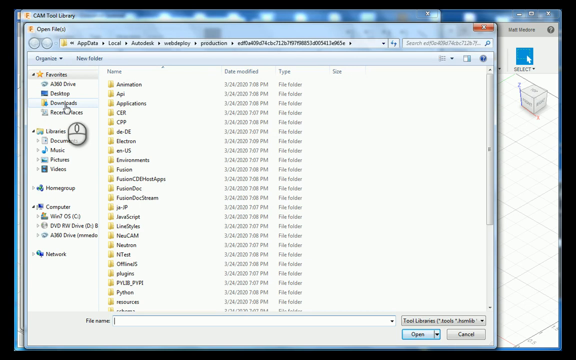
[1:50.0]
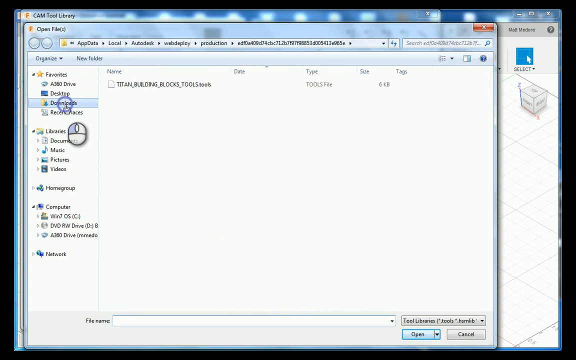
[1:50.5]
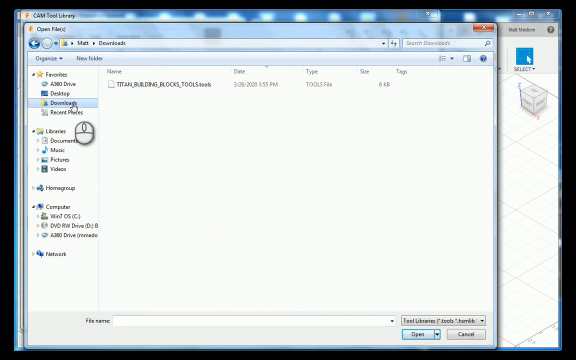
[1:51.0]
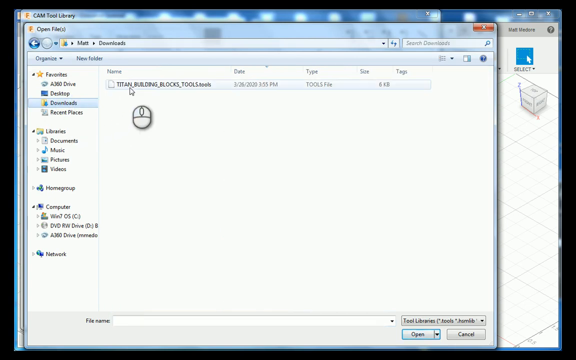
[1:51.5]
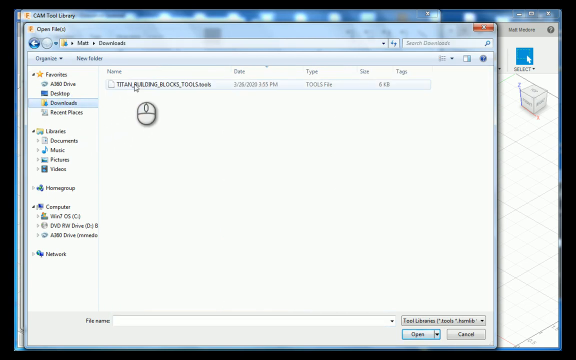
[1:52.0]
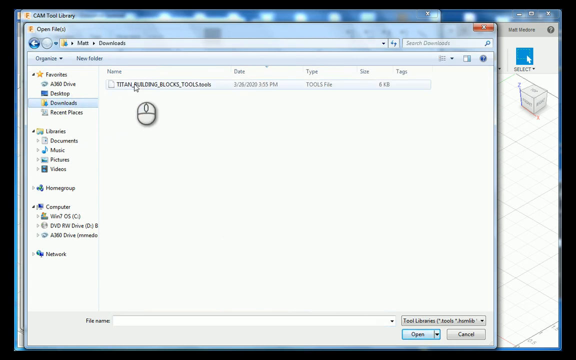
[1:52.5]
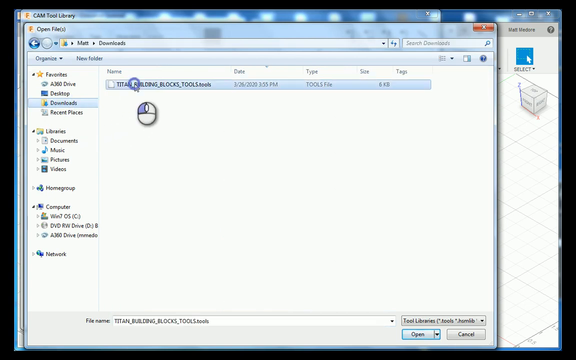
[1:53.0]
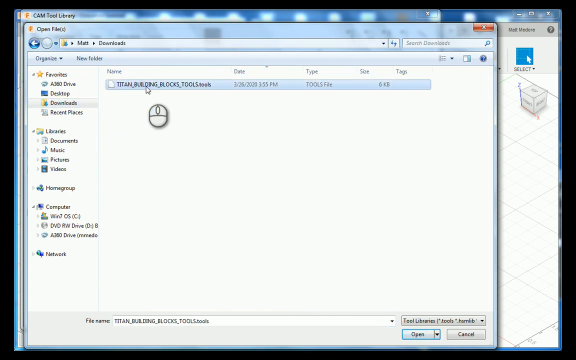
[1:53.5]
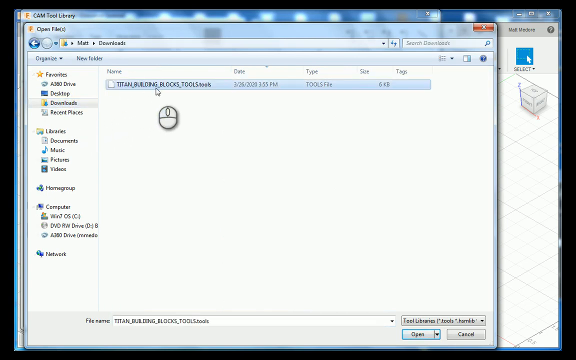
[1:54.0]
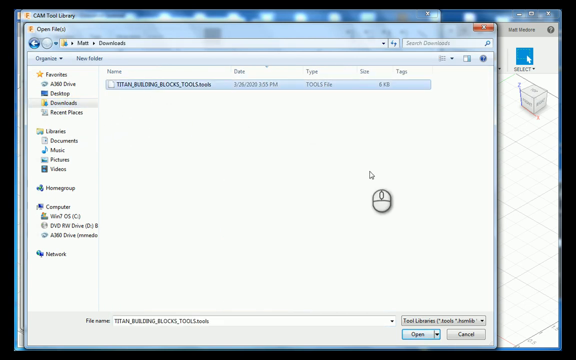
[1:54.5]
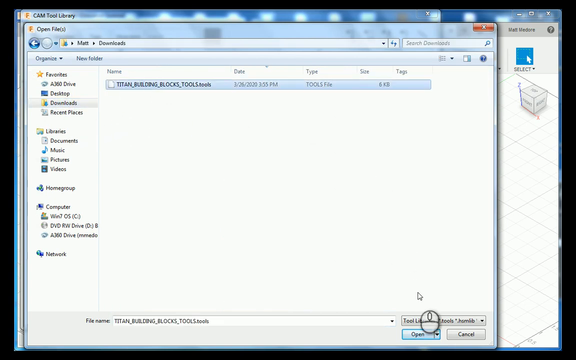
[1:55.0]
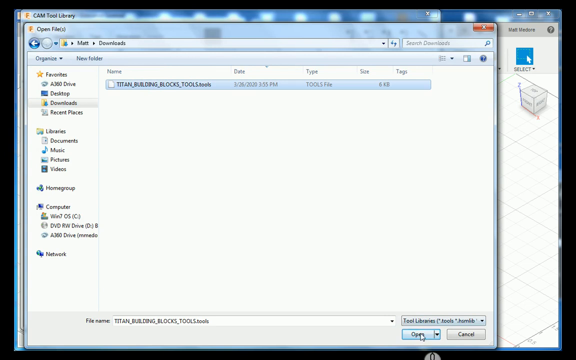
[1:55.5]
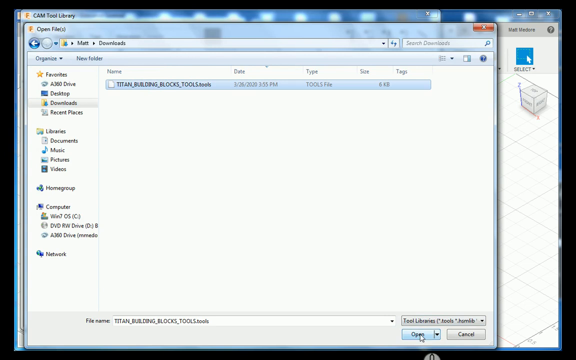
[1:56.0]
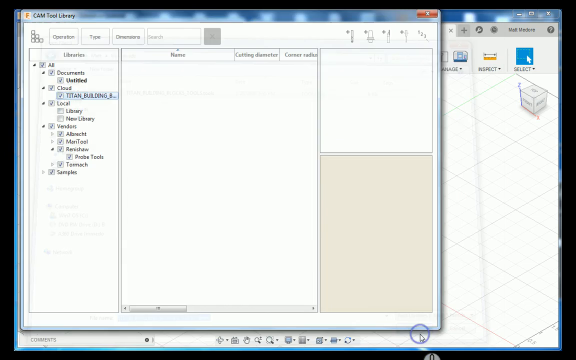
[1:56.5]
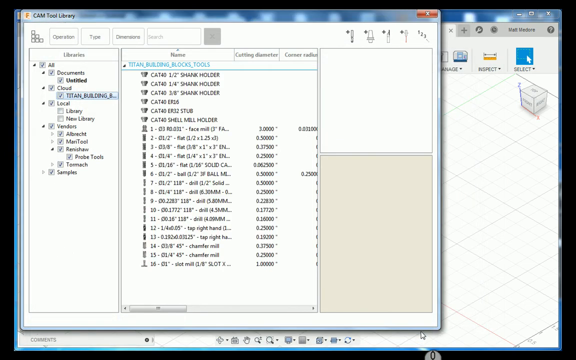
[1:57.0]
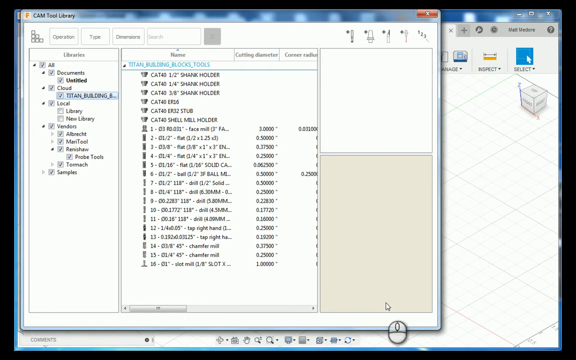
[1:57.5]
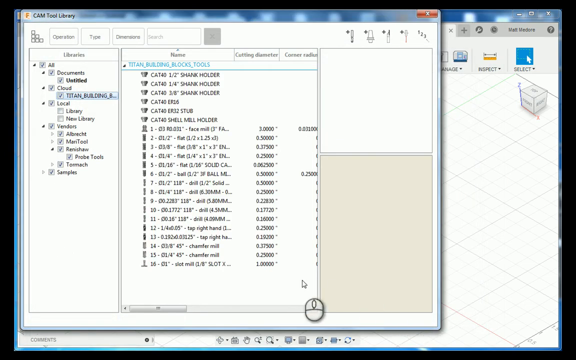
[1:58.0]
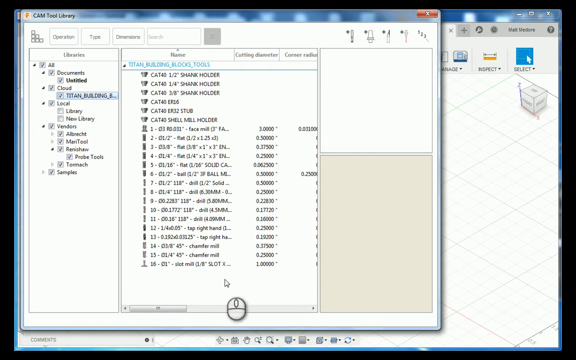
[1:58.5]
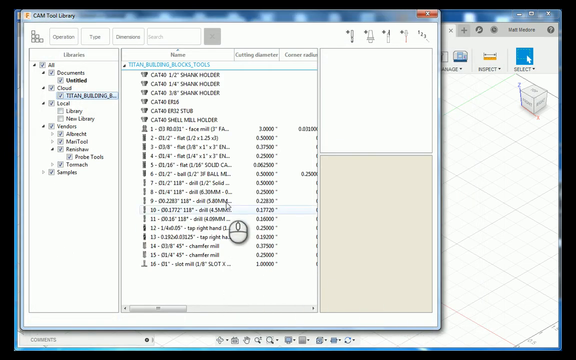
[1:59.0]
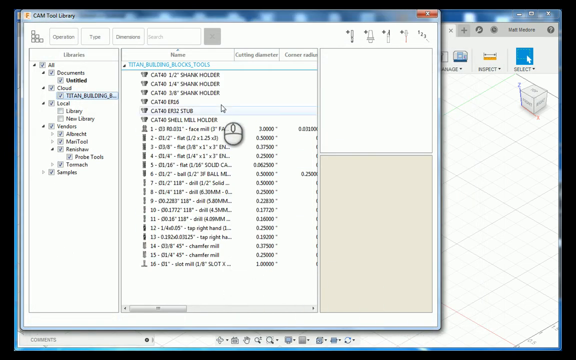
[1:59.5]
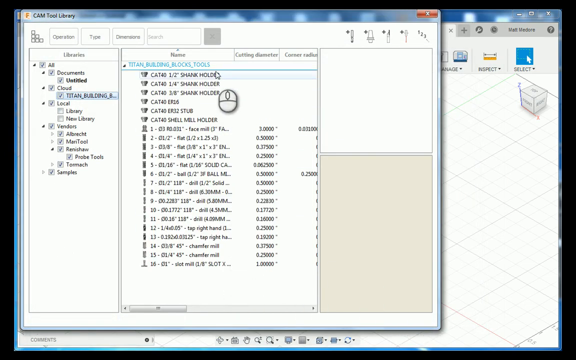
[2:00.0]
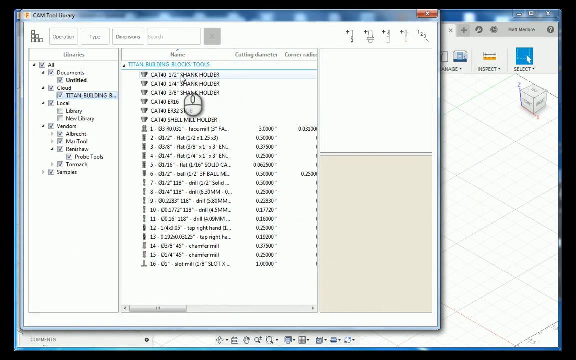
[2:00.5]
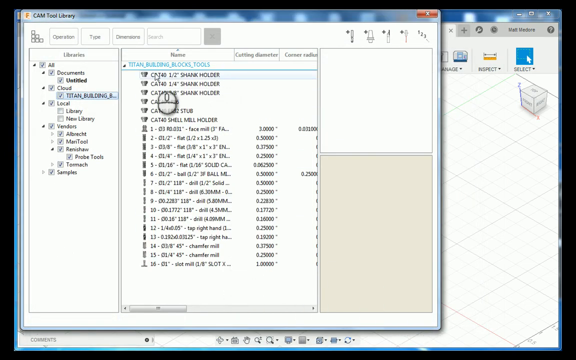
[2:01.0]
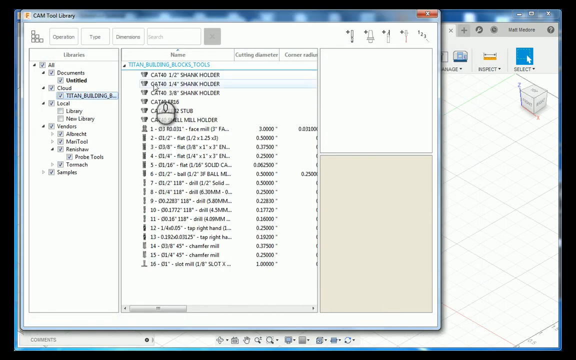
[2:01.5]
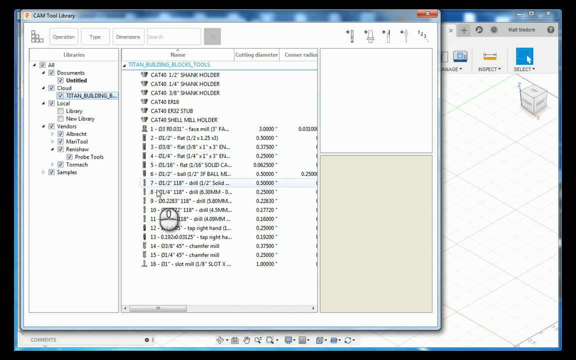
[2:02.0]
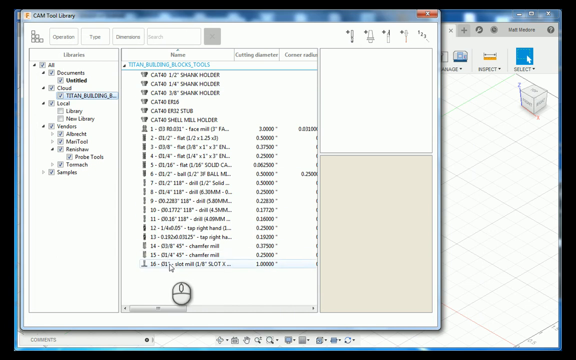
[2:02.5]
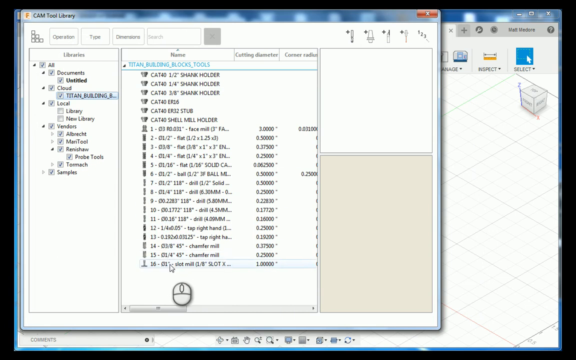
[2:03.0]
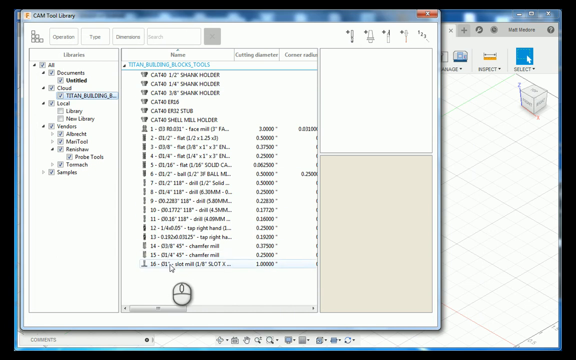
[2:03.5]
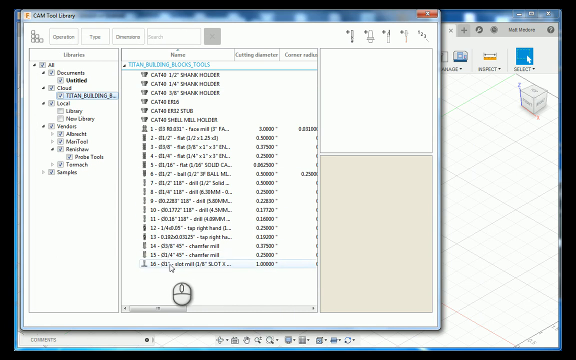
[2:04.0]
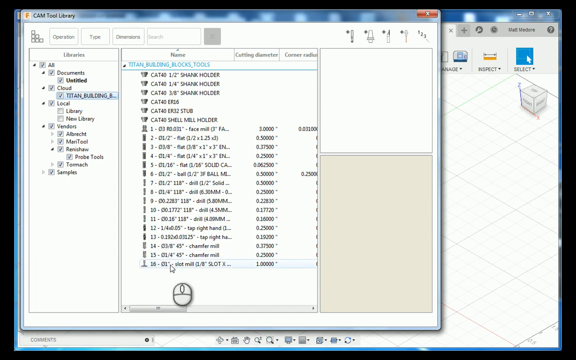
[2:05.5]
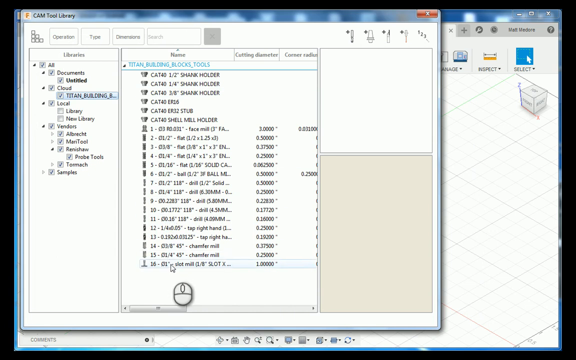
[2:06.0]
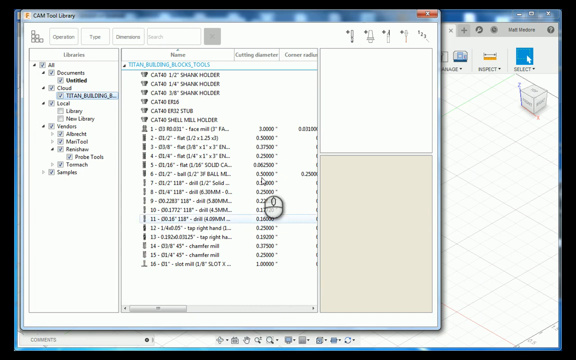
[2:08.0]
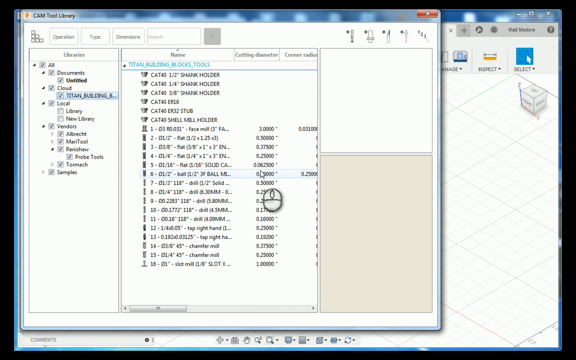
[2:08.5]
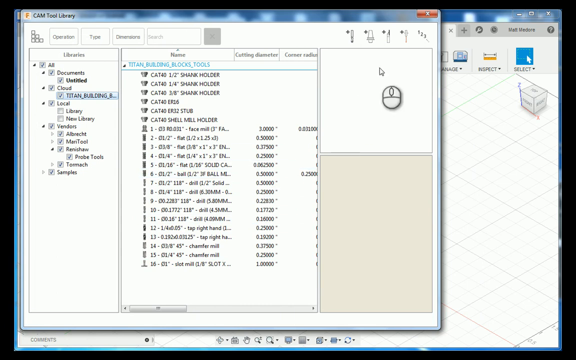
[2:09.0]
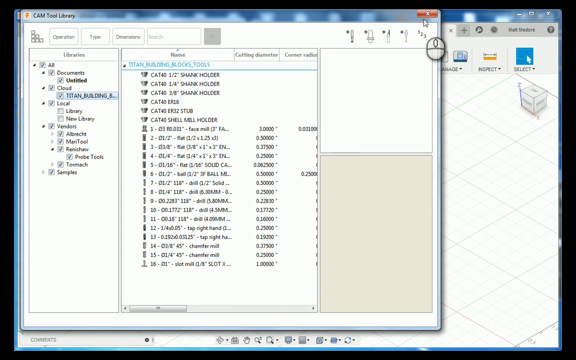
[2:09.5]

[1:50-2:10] A 3D modeling program has multiple sub-windows open, with the foreground window reading "Open Files", a window for selecting files to open. The mouse cursor is over "Downloads" in the left column. The user clicks it, revealing the files in the Downloads folder; the only file reads "Titan_building_blocks_tools.tools", a tools file. The user double-clicks that file and moves the cursor to the "Open" button at the bottom of the window. The window closes and the file opens in the sub-window underneath, which now shows the file on the left and its contents in the middle. The cursor moves up toward the very top entry, which reads "Cat 40 1/2 inch shank holder", then all the way down to the bottom entry, "16-01 inch slice mill", and stays over it for a few seconds. The user then clicks the X to close the CAM Tool Library window.